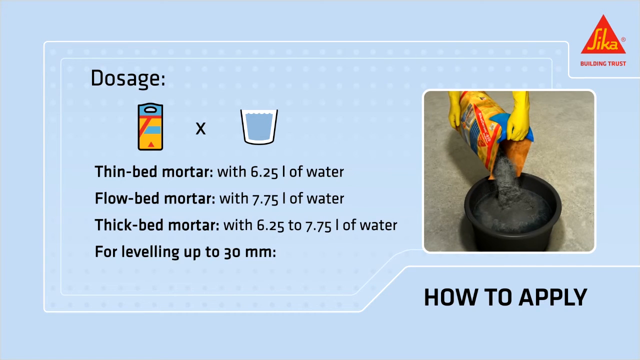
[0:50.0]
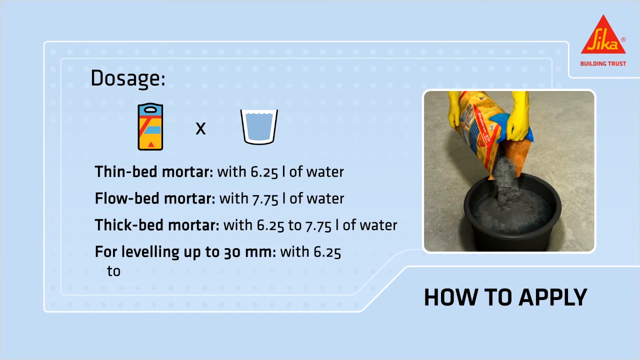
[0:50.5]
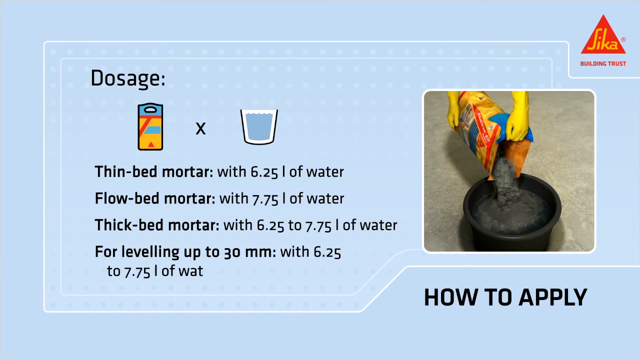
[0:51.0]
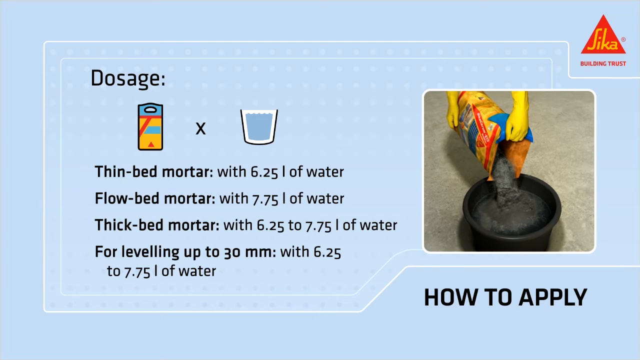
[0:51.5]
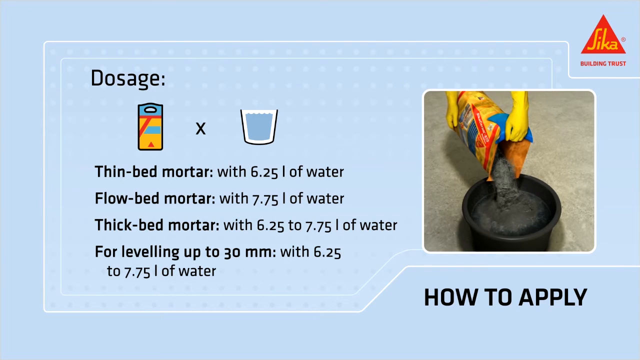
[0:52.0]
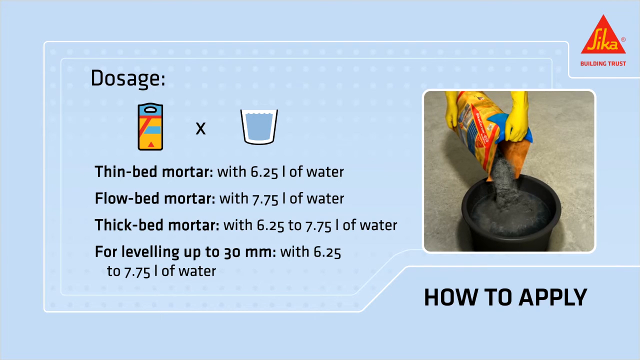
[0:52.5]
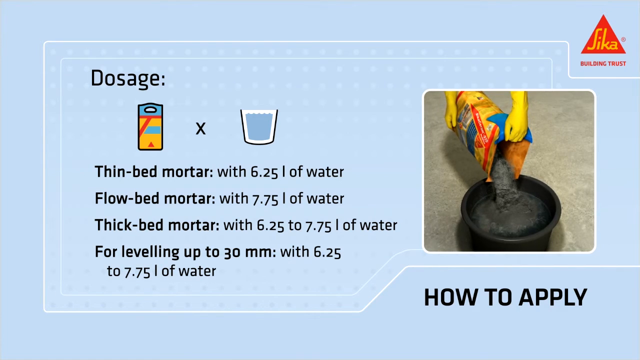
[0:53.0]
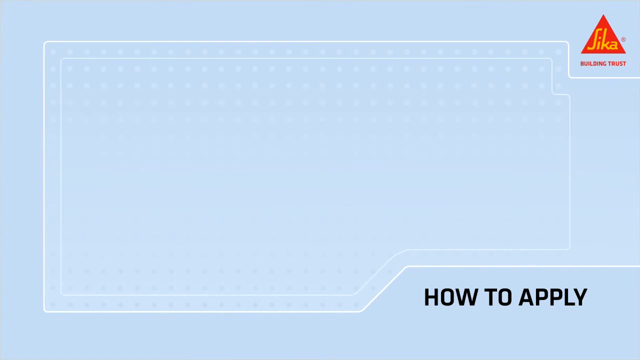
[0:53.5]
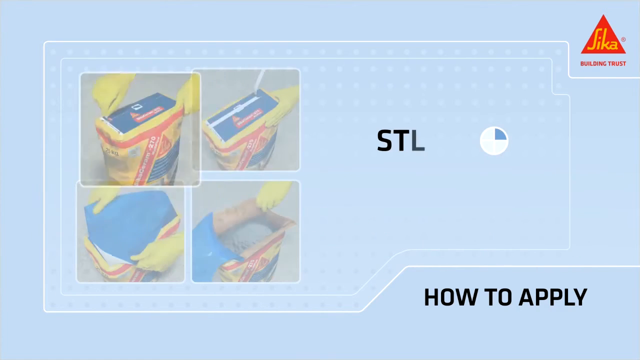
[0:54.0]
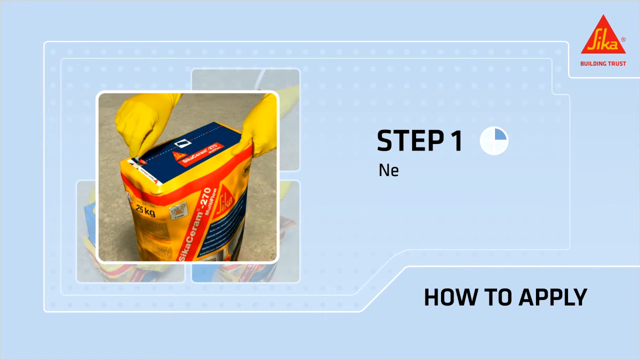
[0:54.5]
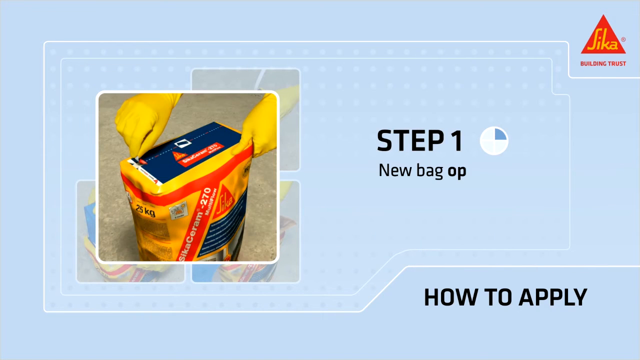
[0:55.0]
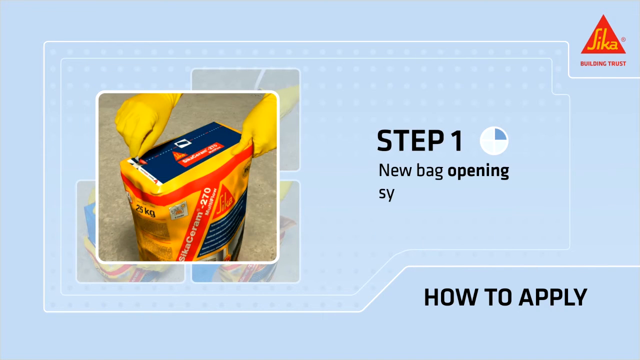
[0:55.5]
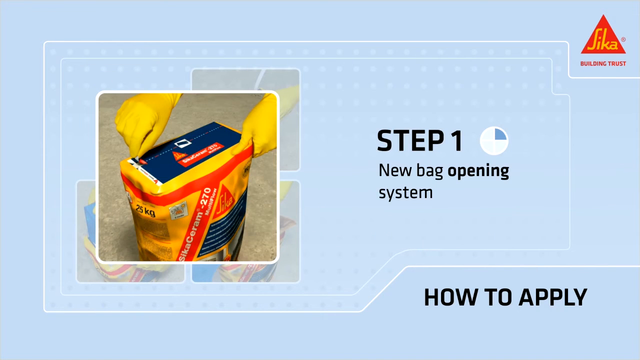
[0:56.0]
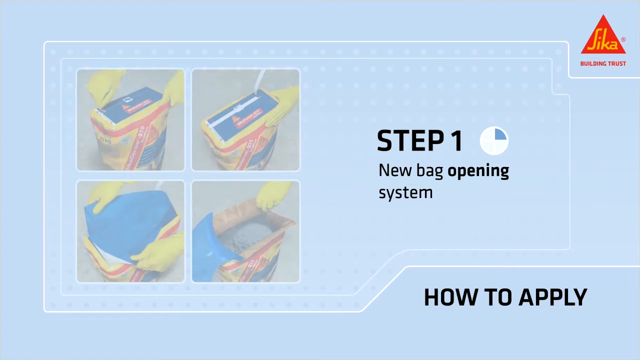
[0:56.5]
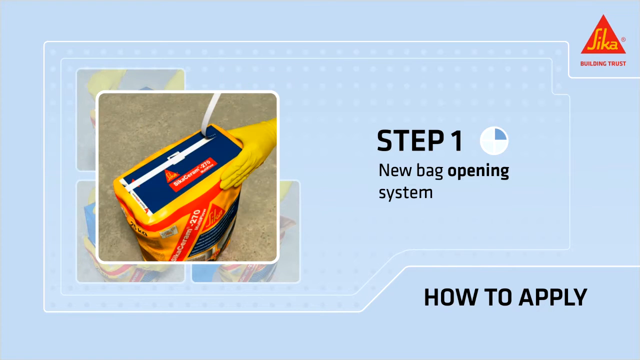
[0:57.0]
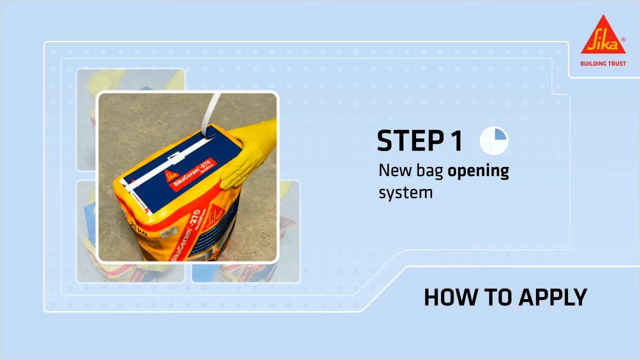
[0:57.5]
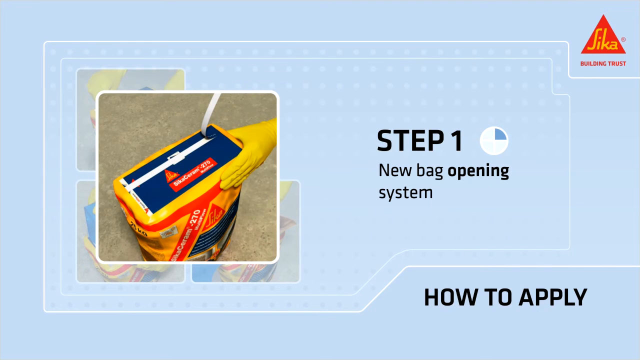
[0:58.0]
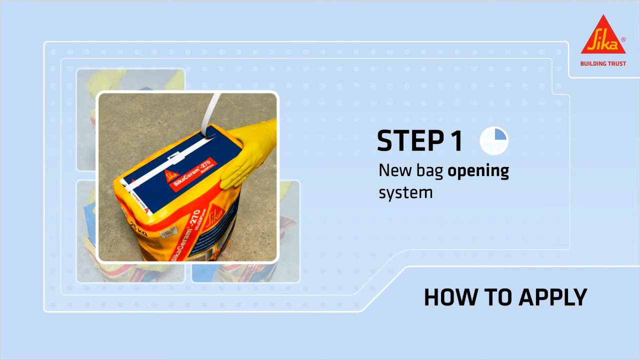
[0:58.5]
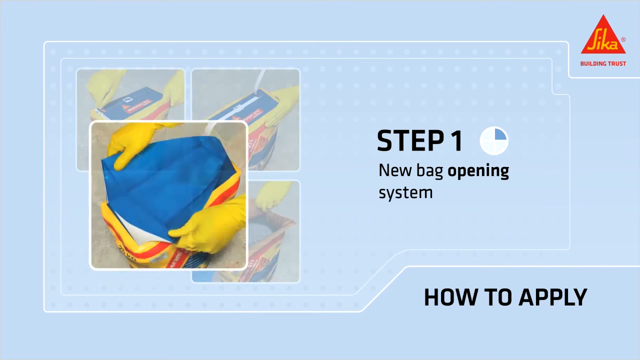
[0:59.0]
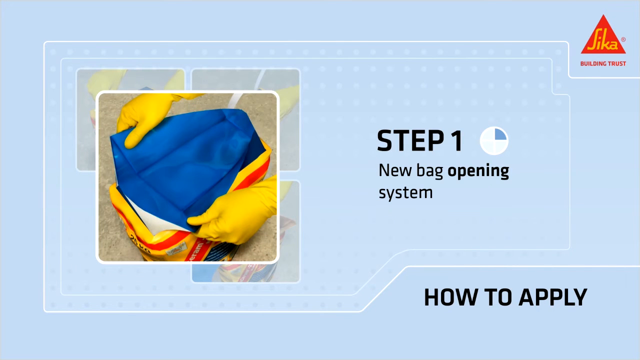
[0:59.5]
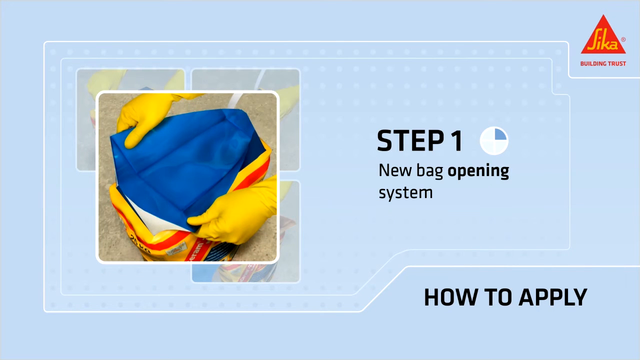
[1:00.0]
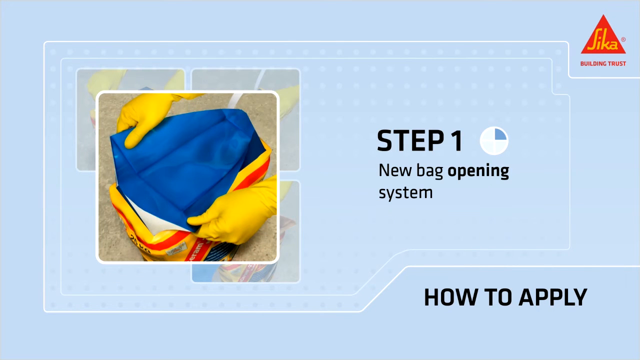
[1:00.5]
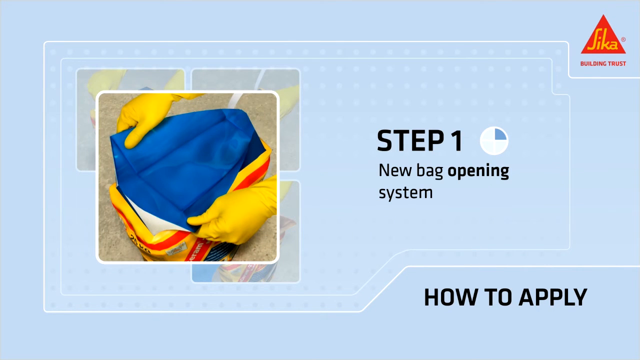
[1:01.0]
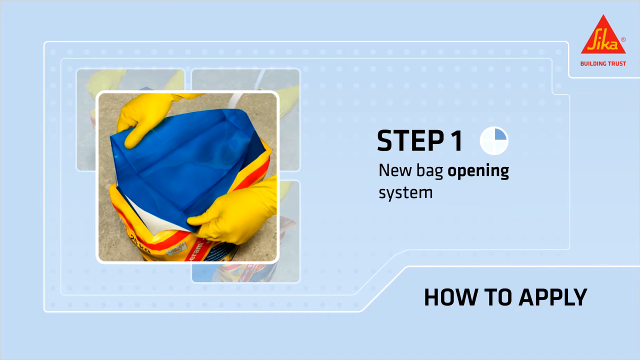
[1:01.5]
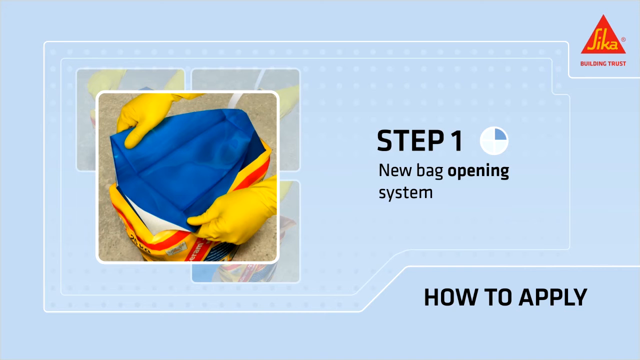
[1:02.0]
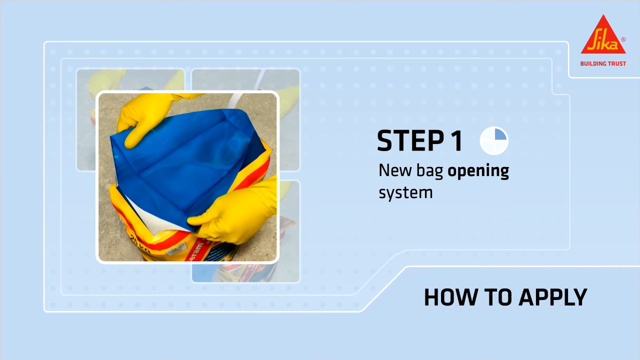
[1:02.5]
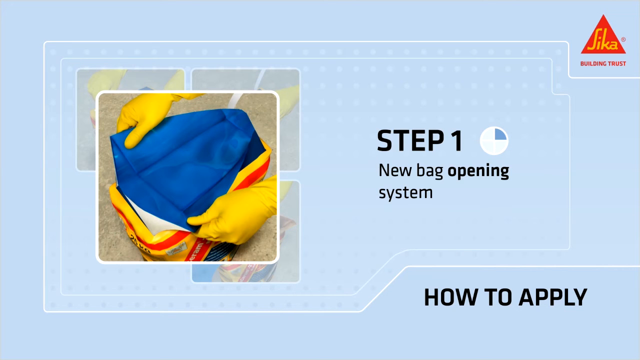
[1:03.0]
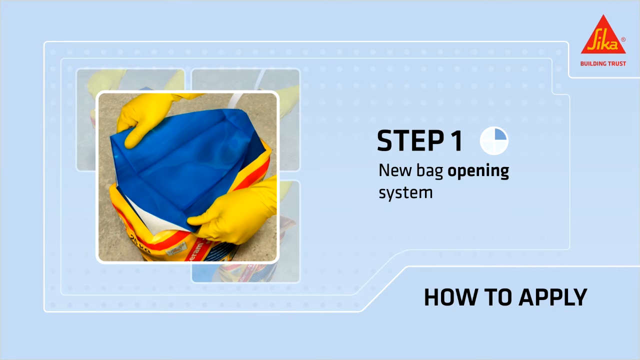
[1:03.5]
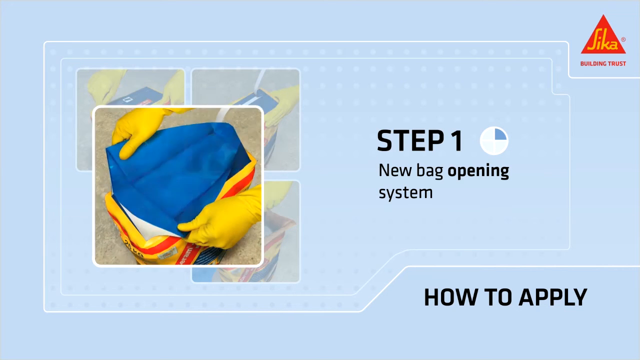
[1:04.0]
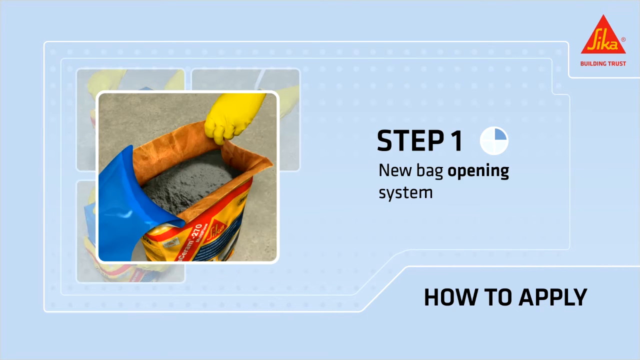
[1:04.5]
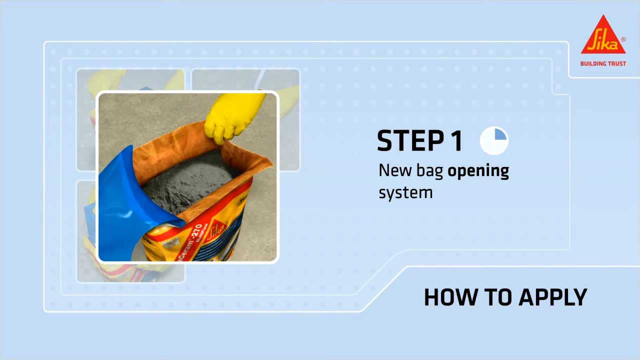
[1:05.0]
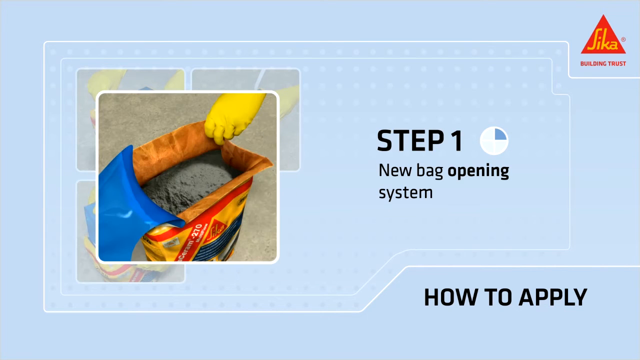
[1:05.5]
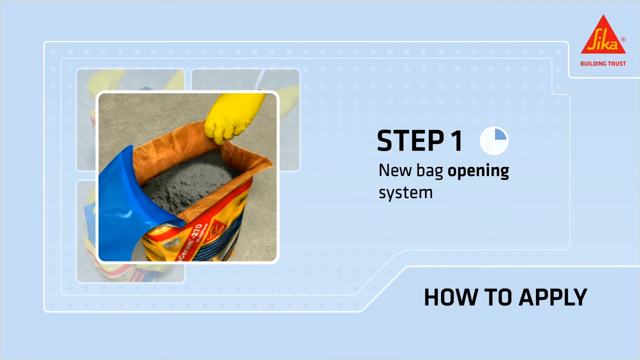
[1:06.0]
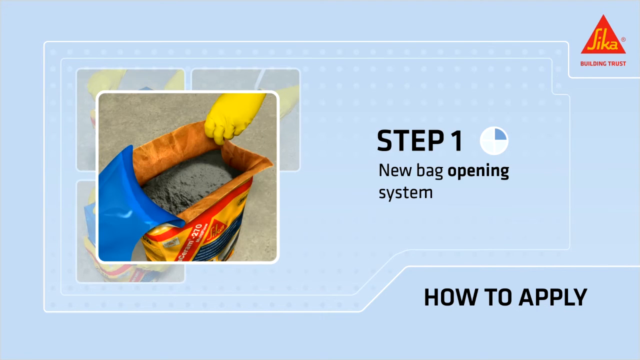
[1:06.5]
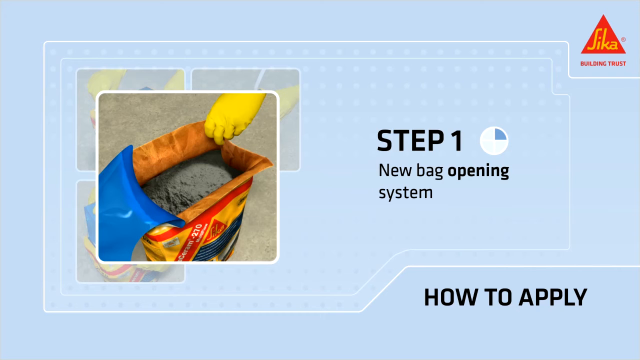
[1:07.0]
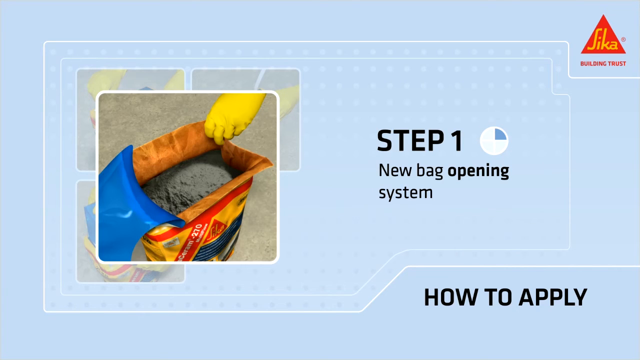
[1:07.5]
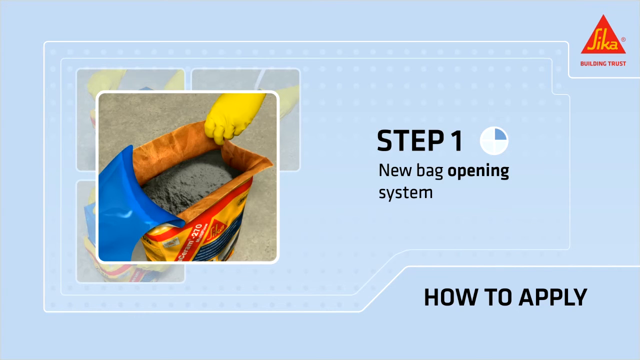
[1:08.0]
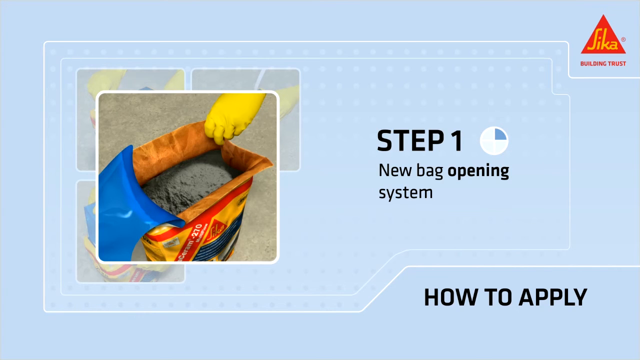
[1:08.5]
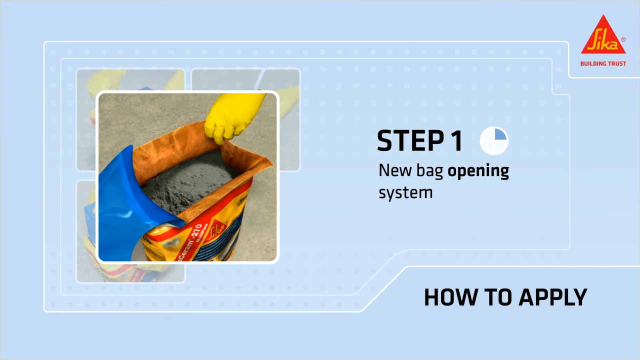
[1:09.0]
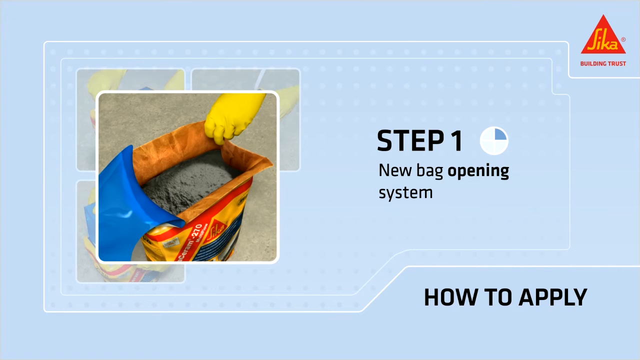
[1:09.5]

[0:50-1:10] The background is blue. On the right is a picture of someone in yellow gloves holding a bag of mortar that looks like it may already be mixed, pouring it into a black pot or bucket. On the left are recommendations: "thin bed mortar" with 6.25 liters of water, "flow bed mortar" with 7.75 liters of water, "thick bed mortar" with 6.25 to 7.5 liters of water, and "for leveling up to 30 millimeters" with 6.25 to 7.5 liters of water. This slides out of the way and "step one" appears, with someone opening a new bag. Three pictures show the bag being opened, and in a fourth picture the blue has been pulled back to show powder inside.